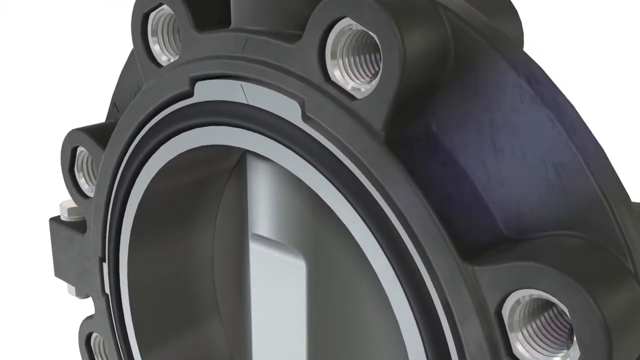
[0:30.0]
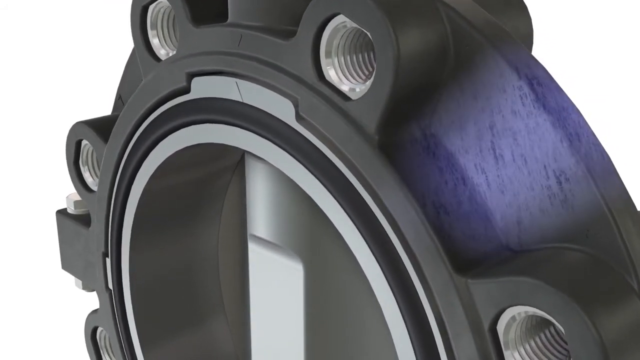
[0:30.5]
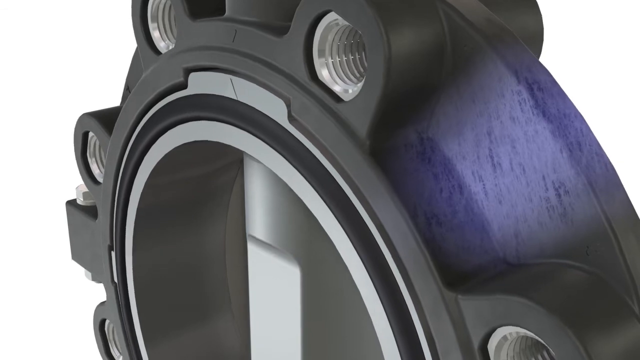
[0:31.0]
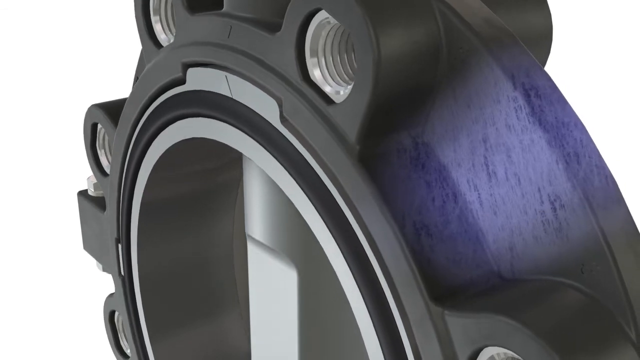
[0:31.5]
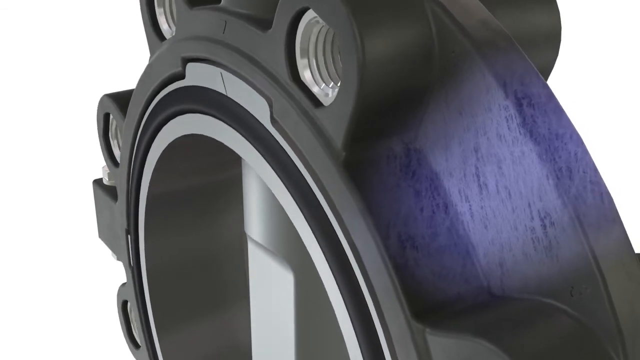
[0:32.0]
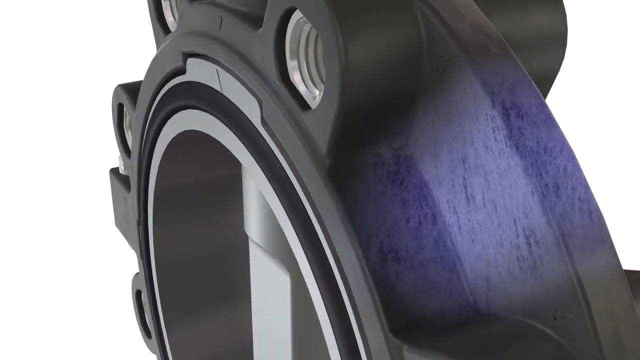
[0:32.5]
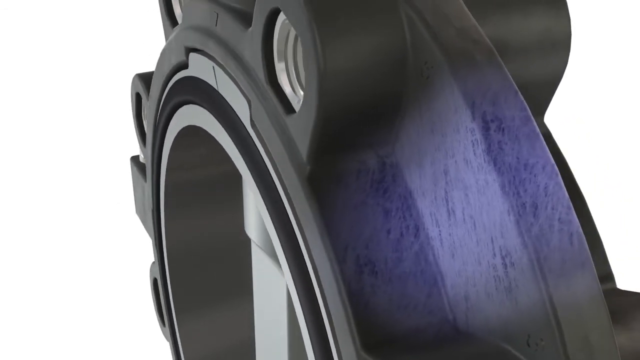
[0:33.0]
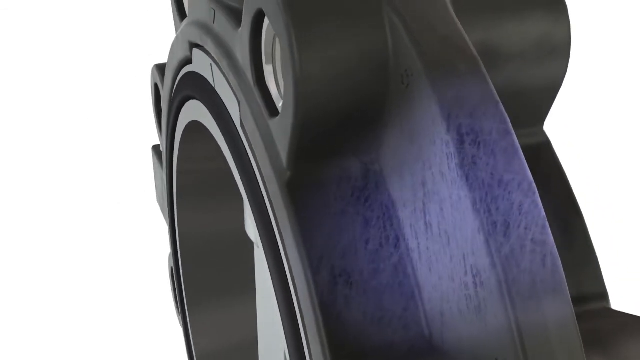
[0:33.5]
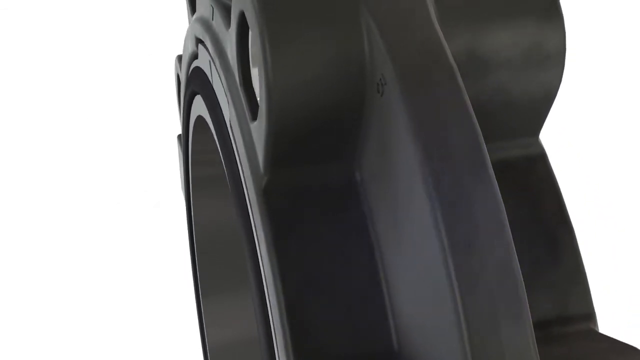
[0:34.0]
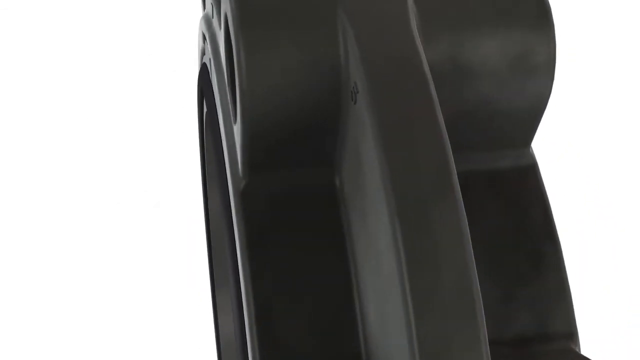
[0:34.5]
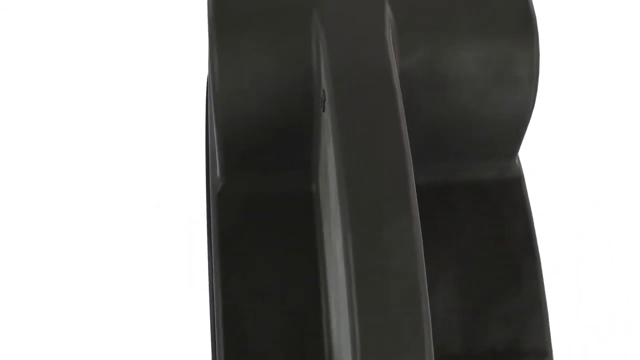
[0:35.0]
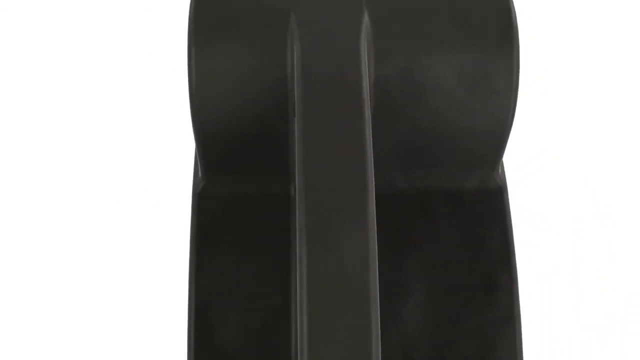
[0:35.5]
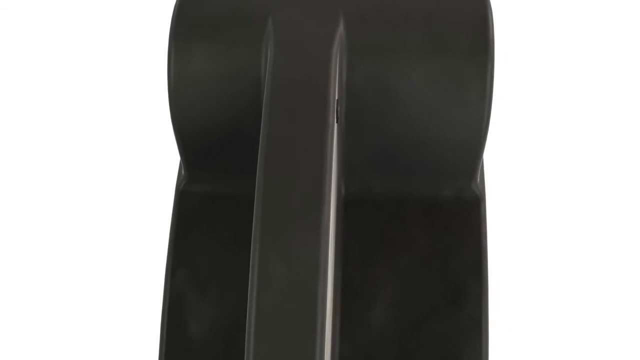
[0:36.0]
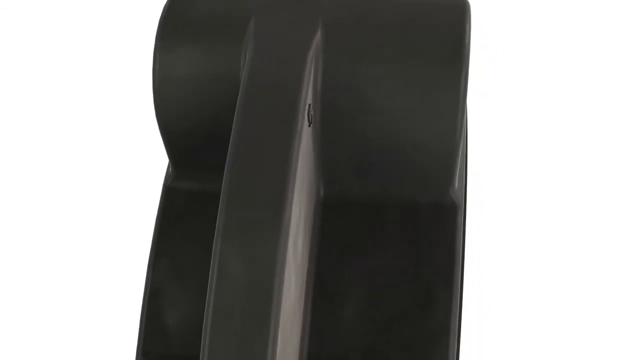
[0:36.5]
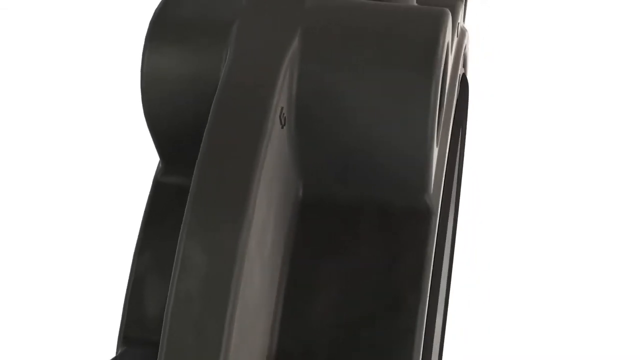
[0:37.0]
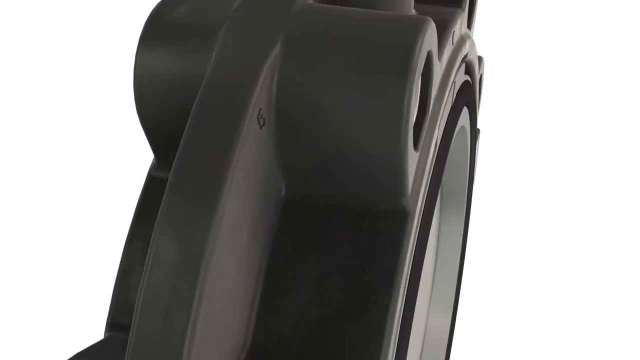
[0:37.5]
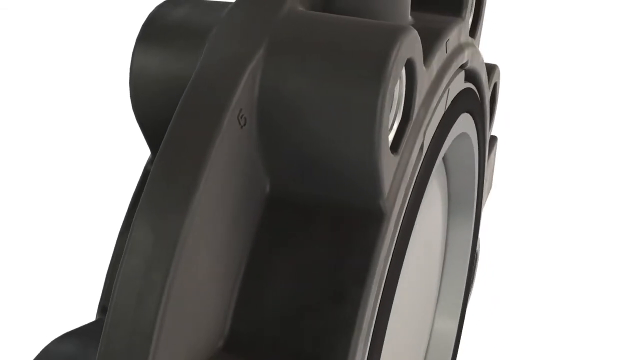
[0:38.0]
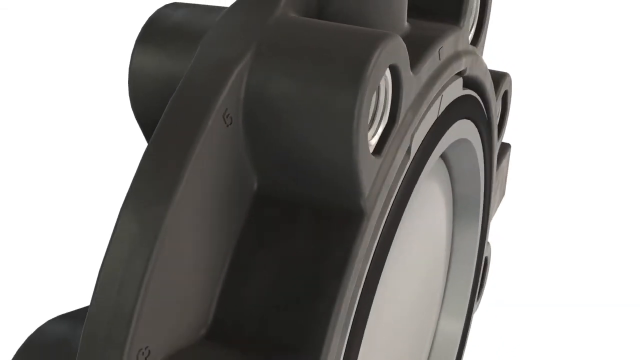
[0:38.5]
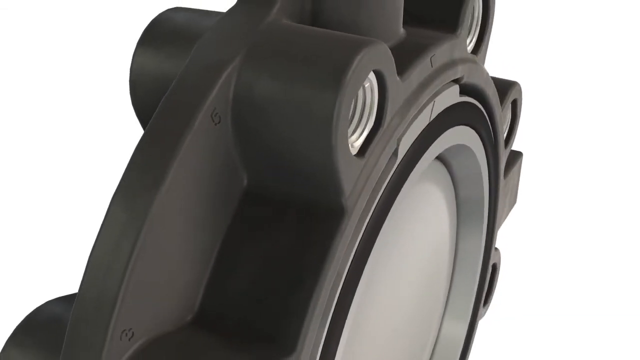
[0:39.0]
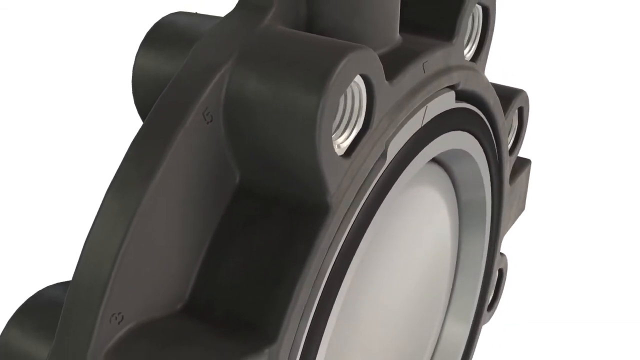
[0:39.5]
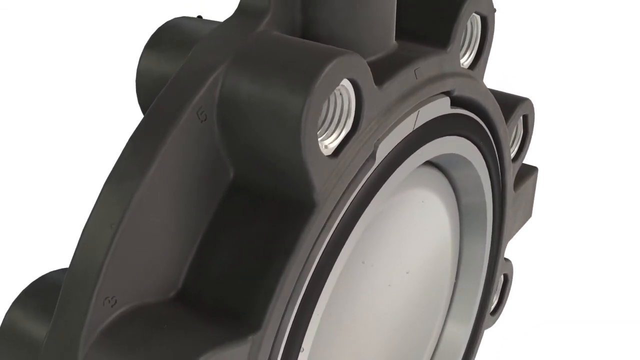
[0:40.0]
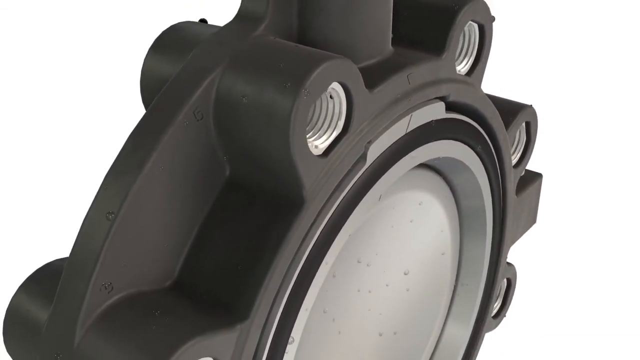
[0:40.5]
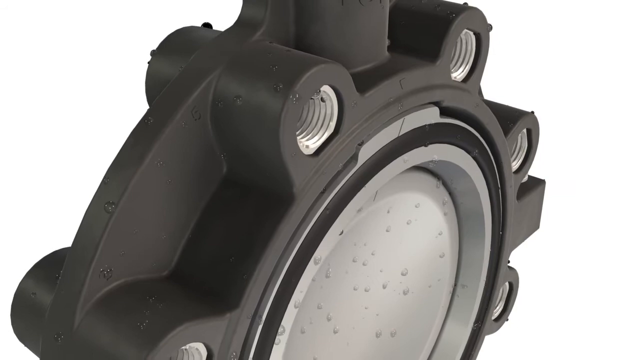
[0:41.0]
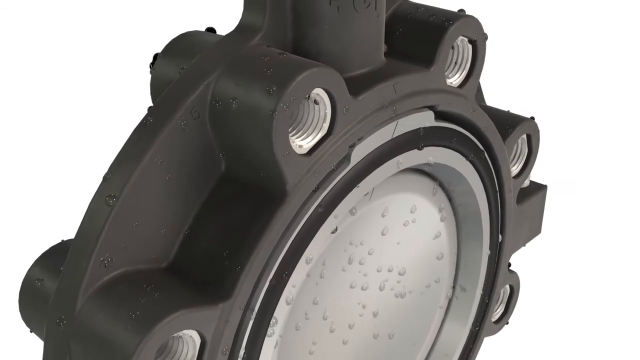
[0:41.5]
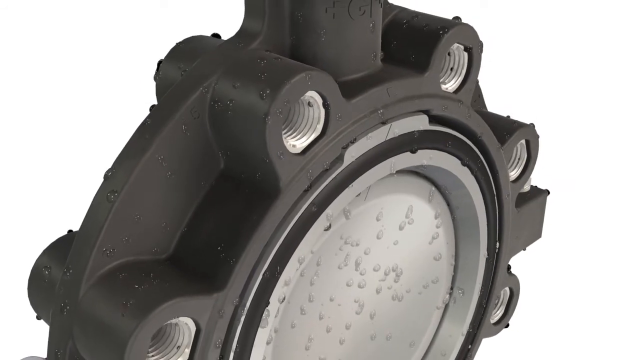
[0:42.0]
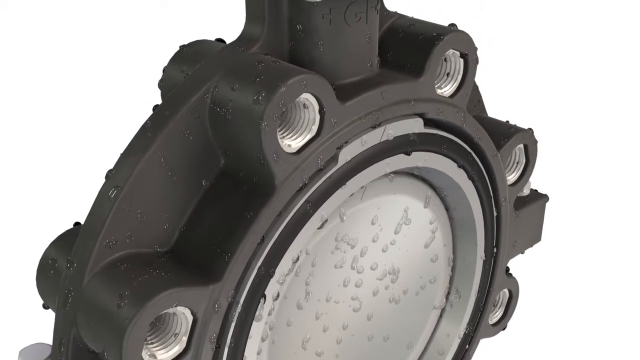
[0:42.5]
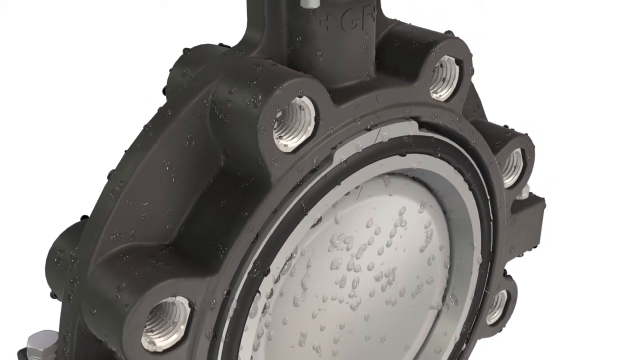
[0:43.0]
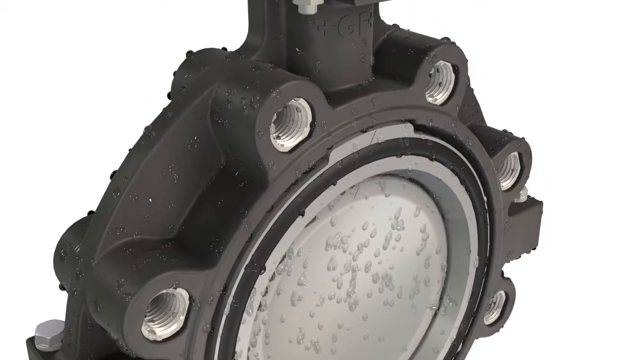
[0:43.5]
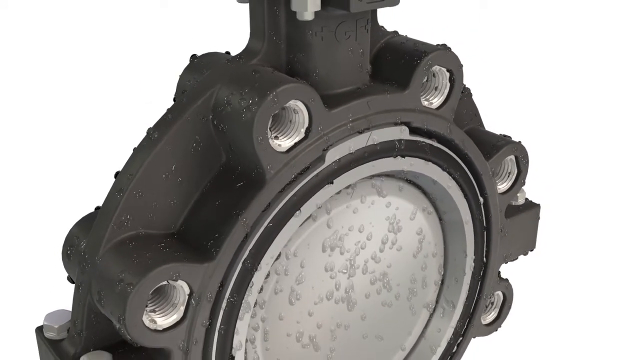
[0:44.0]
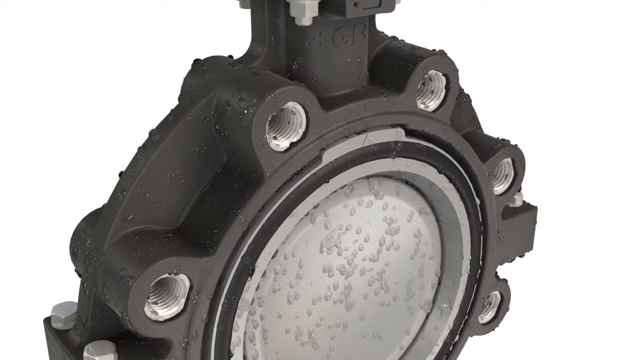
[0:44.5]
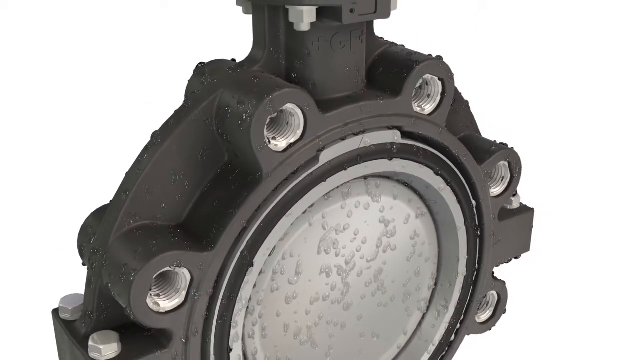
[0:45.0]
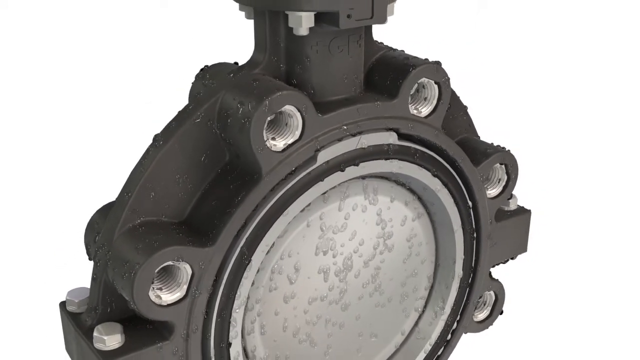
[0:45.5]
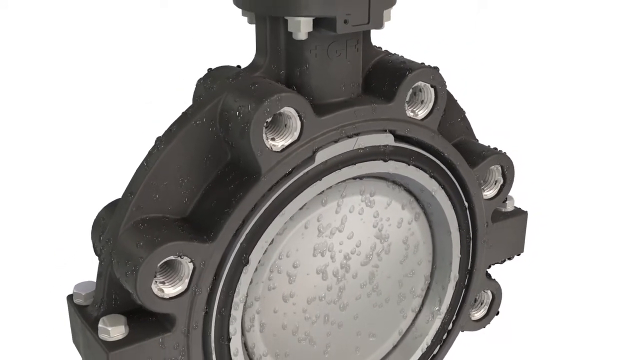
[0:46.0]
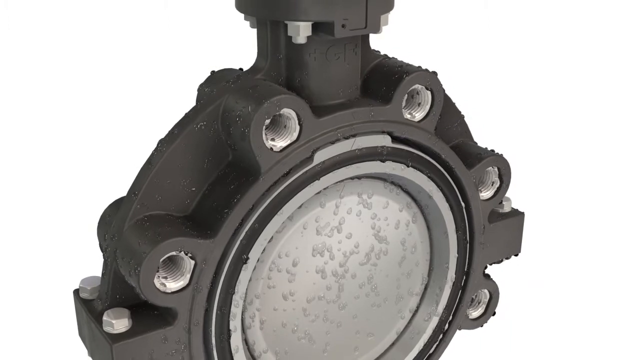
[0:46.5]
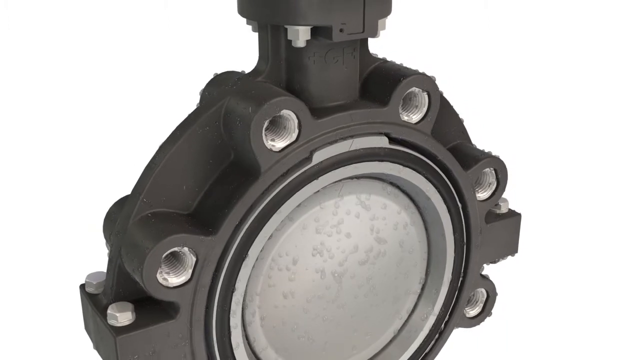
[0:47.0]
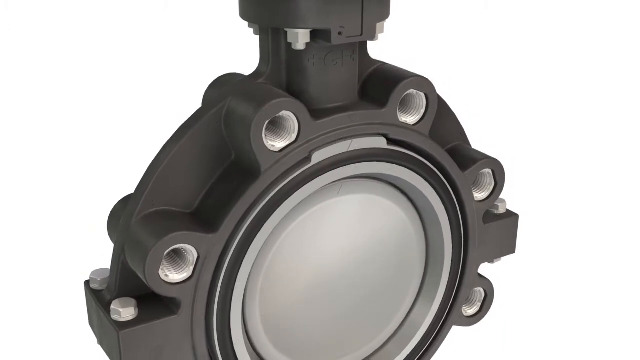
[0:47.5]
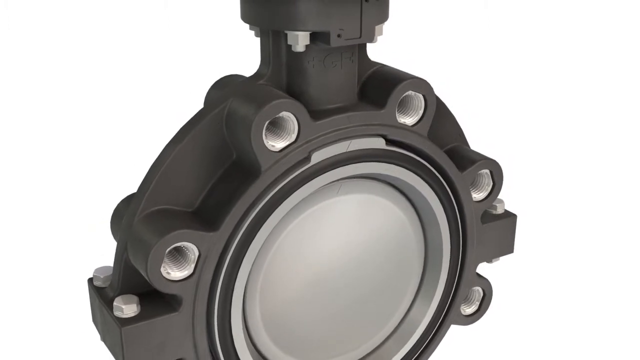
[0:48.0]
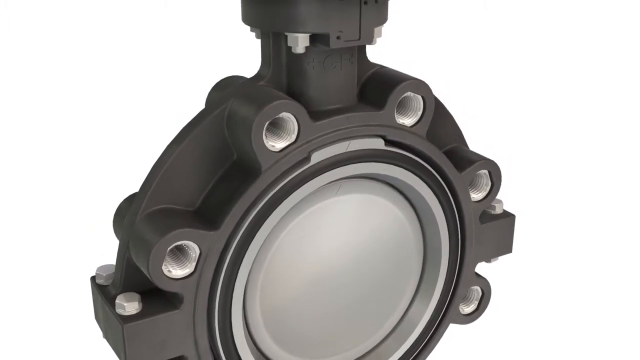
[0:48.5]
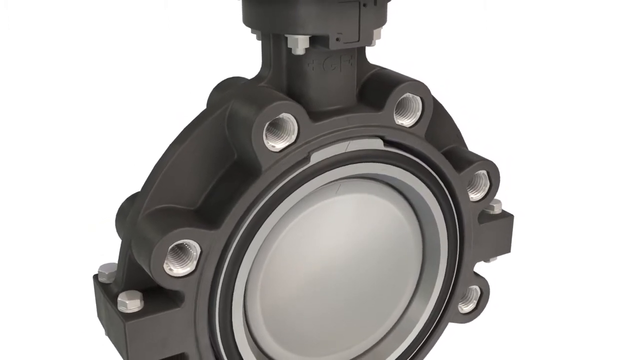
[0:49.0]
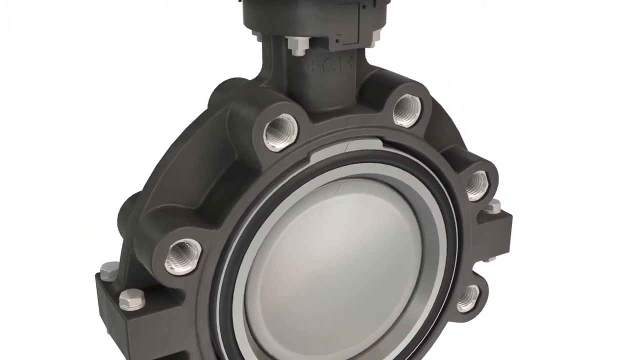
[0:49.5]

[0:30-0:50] The view zooms around the black object, very close up, showing a grey circle in the middle with a black outer circle, then a grey circle and then a lighter black. The view moves to the edge, which is slightly ridged, with a ridge and then a straight piece going around it. Edited-on water droplets run over it, covering the front and the sides, before they vanish and something is seen coming out of the back of it. A 3D view of the object follows. It has pale grey holes around the edges with ridges inside, looking as though screws could be screwed into them. At the top is a taller black section with pale grey within it.